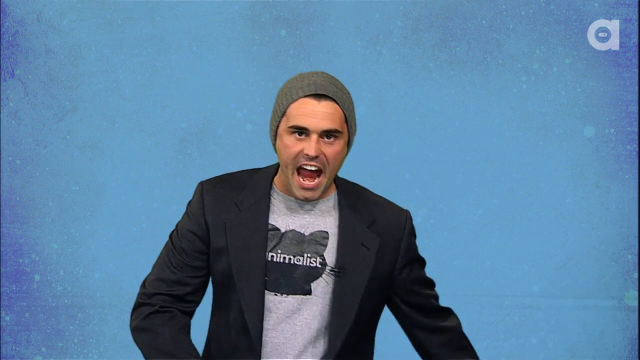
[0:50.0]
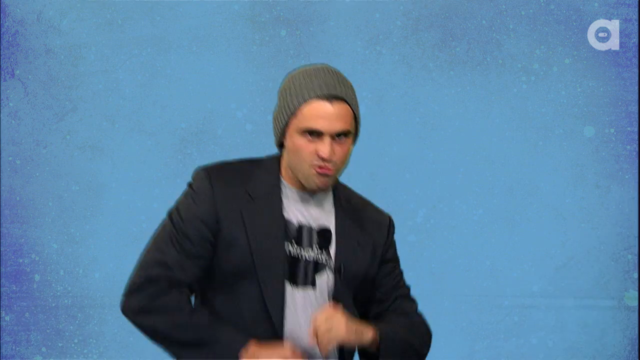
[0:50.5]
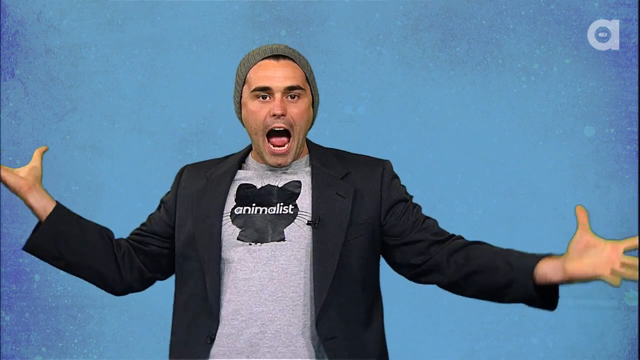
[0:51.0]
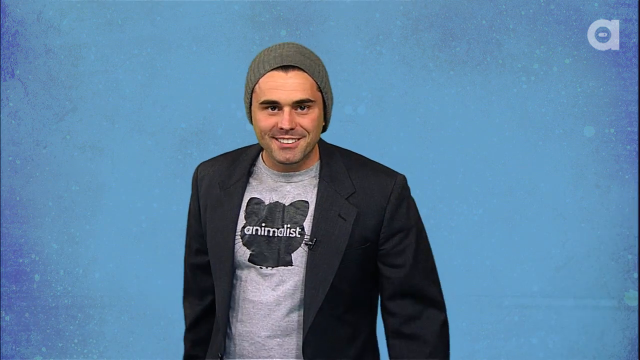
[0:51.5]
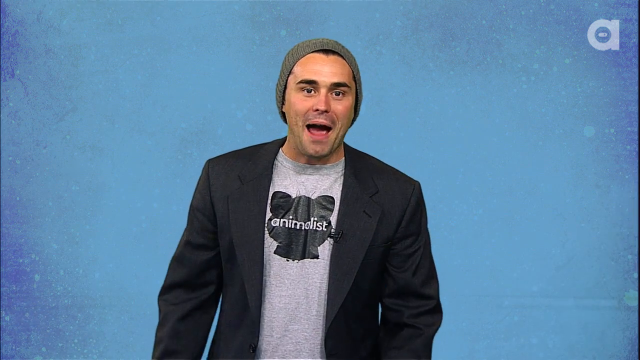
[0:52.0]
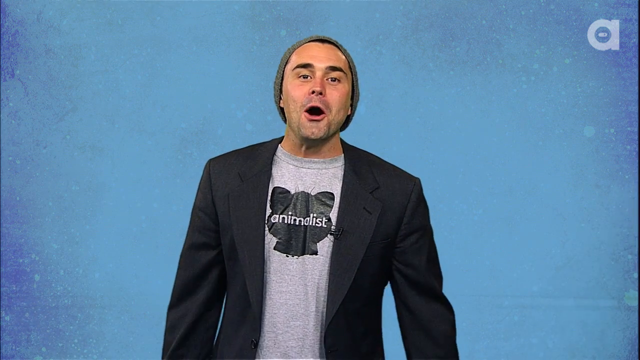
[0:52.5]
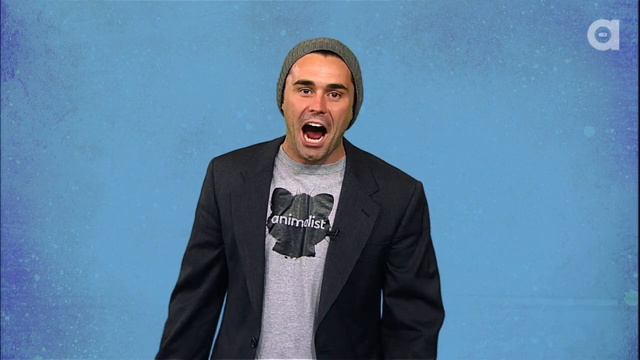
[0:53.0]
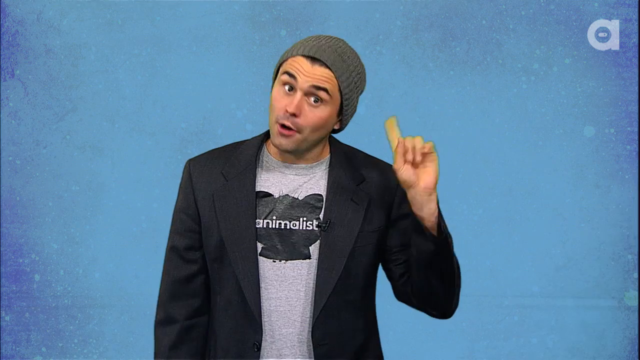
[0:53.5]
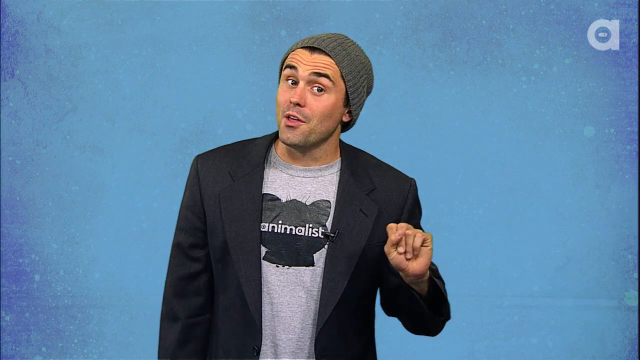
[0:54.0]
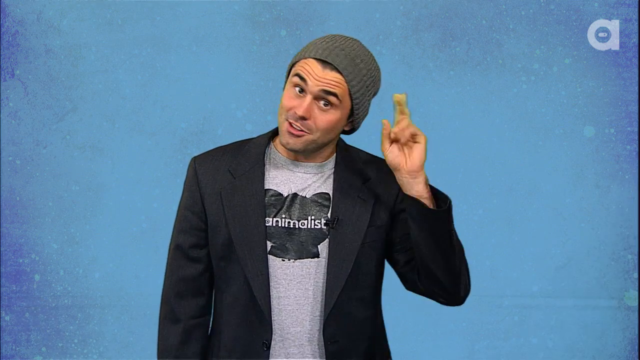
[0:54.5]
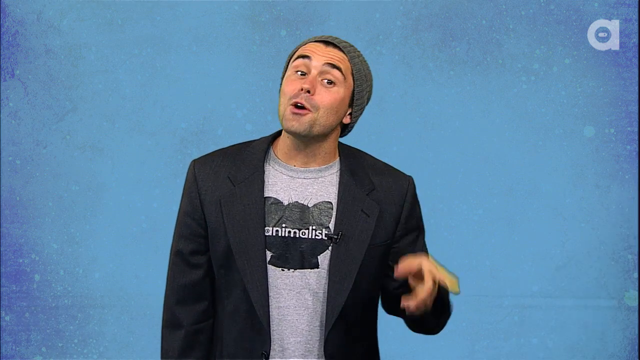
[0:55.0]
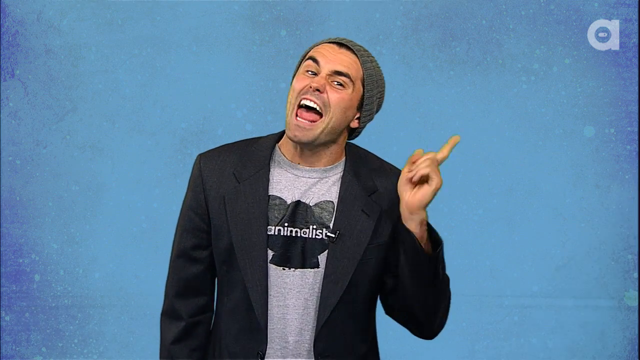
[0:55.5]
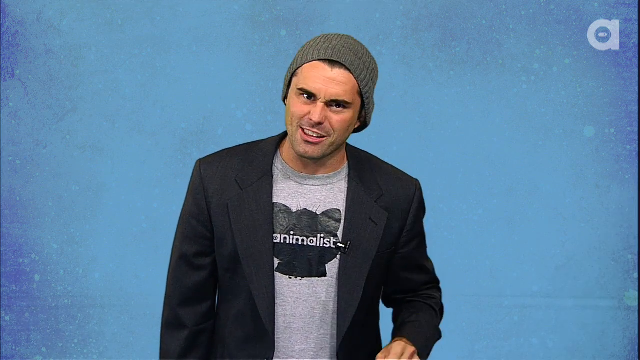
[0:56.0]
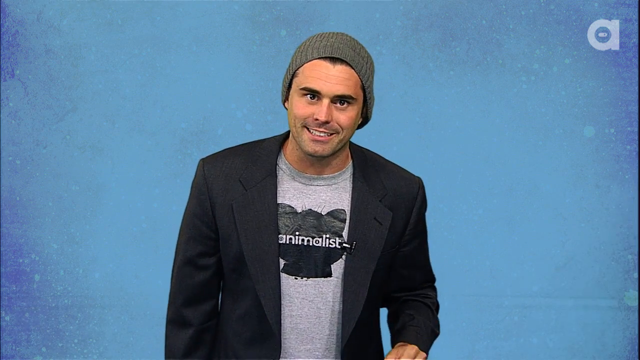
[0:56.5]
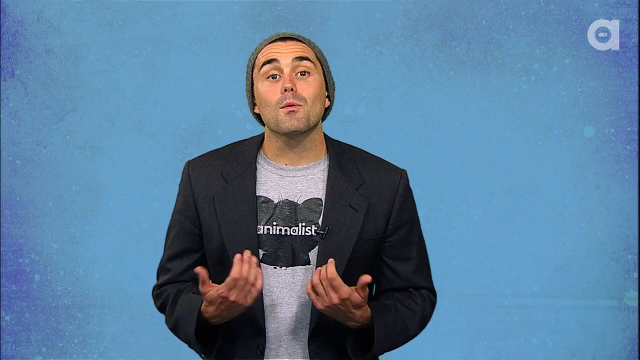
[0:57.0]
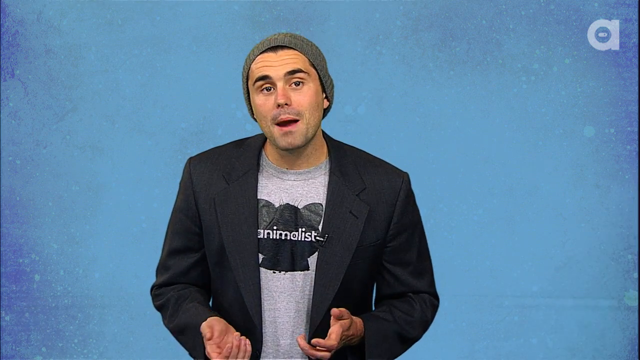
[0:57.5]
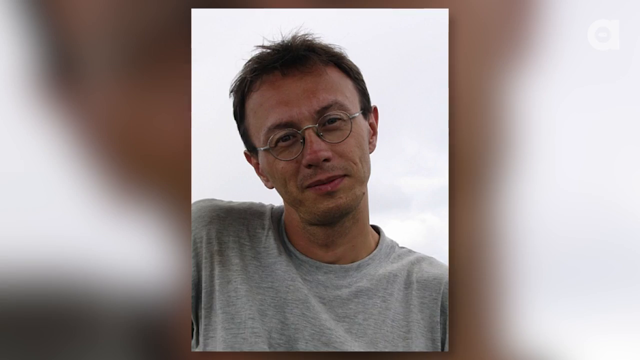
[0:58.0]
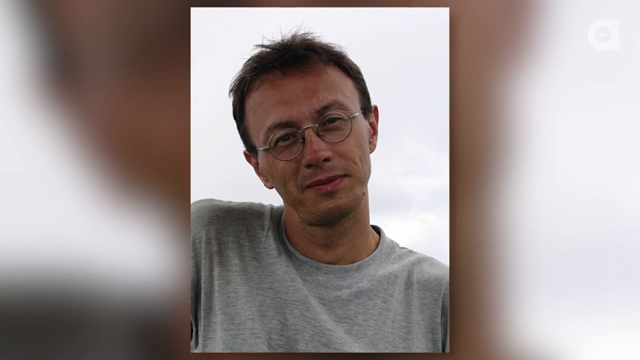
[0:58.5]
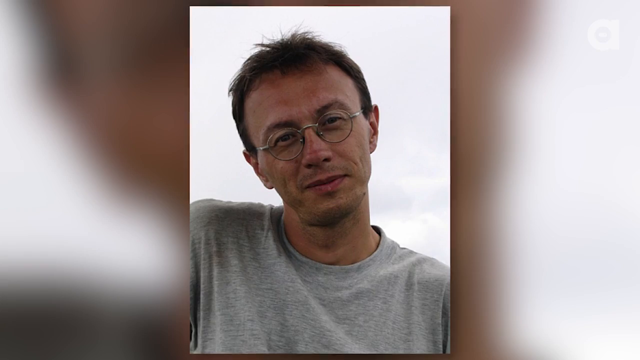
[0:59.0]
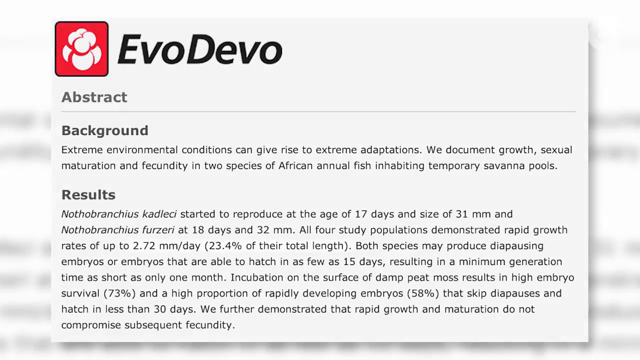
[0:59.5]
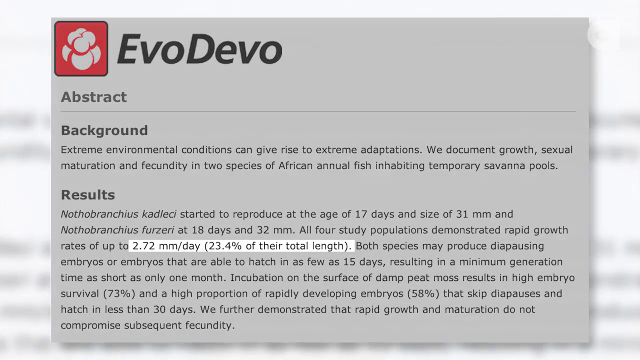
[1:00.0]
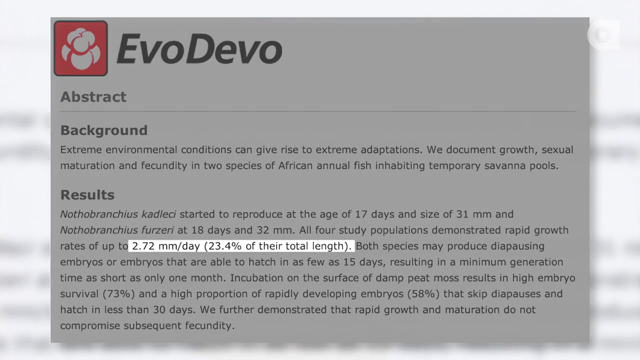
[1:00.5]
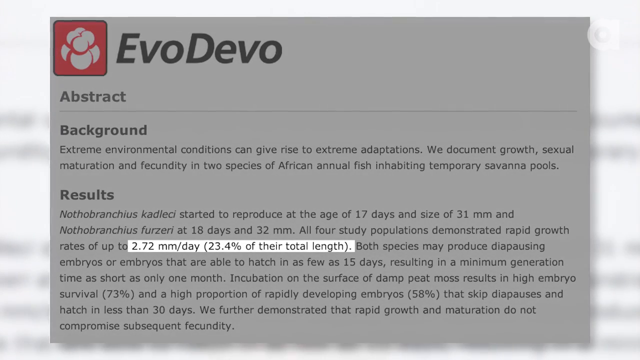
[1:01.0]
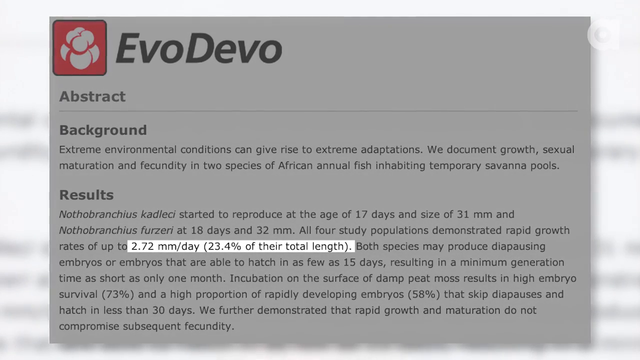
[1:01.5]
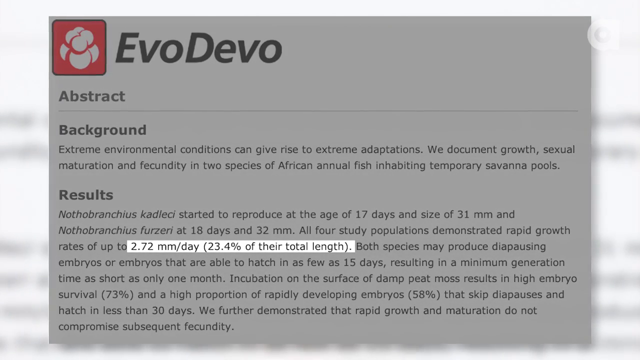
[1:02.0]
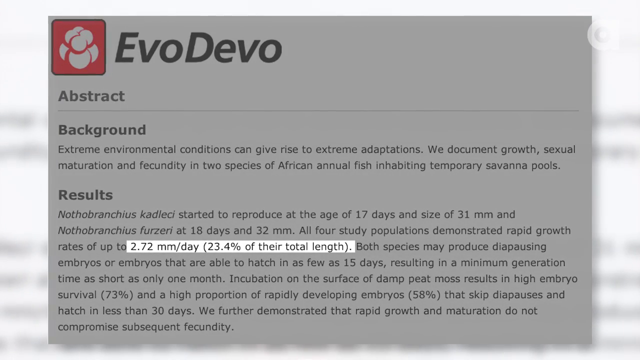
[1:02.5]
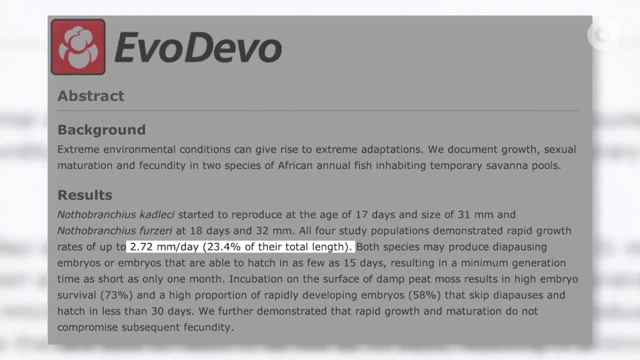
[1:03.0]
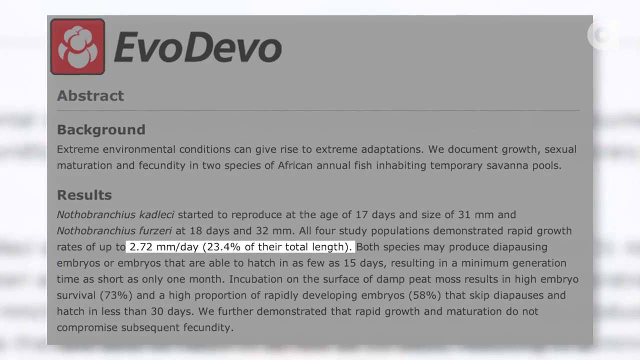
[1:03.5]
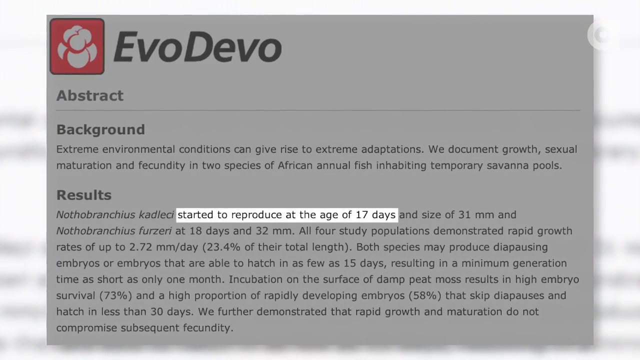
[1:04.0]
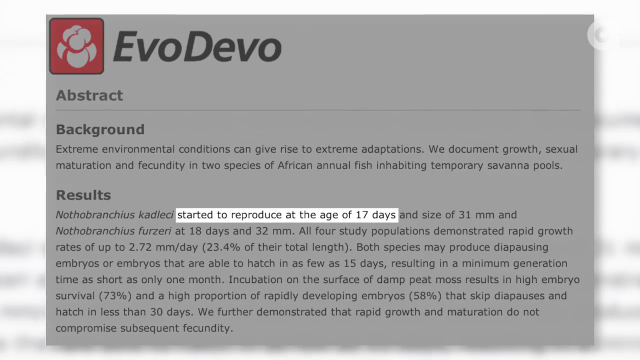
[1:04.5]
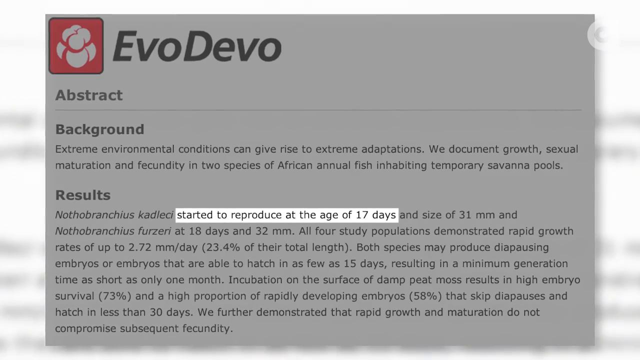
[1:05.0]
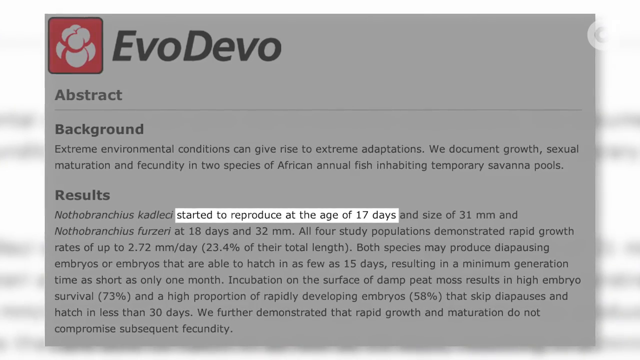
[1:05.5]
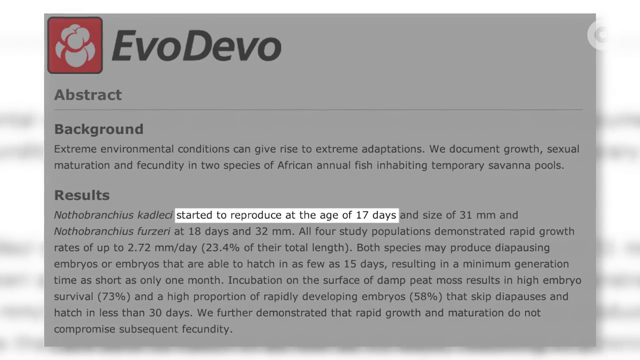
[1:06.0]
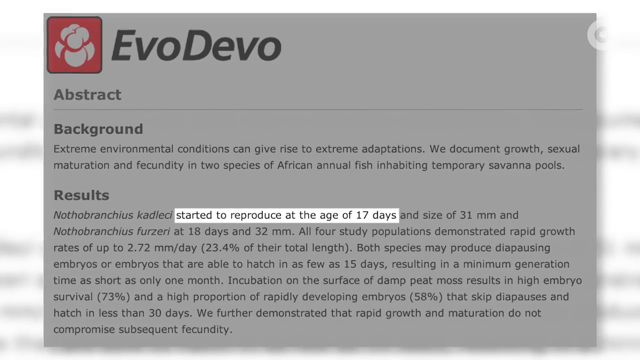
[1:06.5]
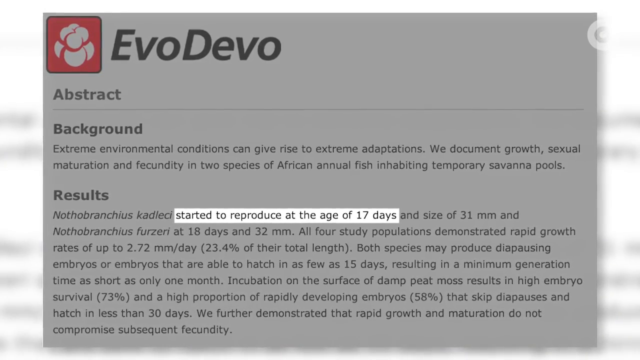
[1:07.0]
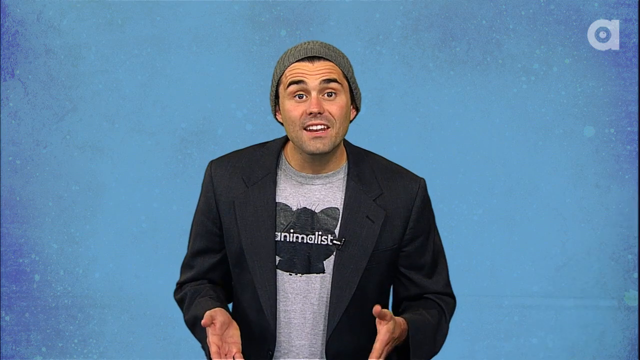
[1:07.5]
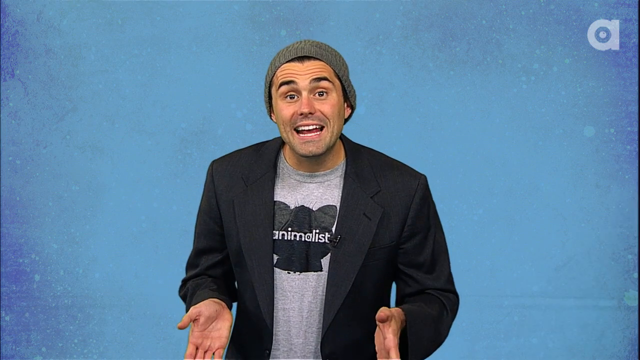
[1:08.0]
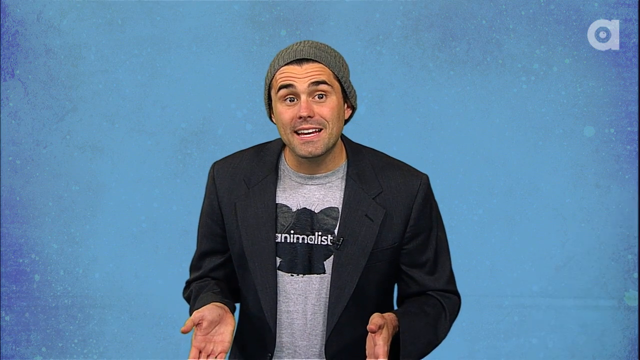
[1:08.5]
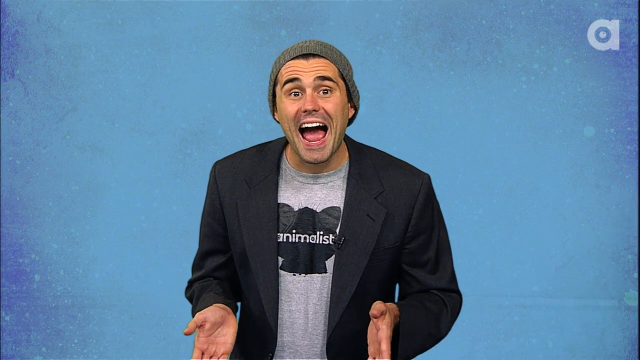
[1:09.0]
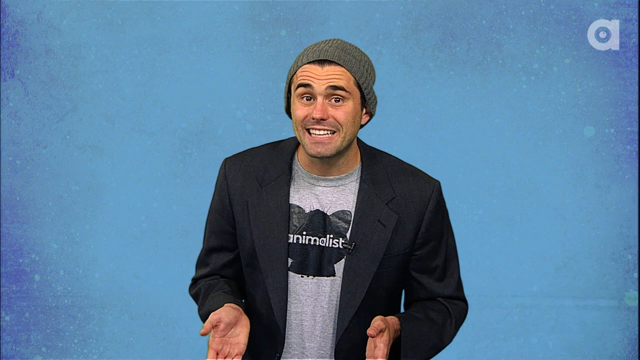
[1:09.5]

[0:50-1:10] The host gestures wildly at the camera. A photo shows an older, very thin man wearing glasses, with very short, blondish hair. Another image appears of a website page with "Evo Devo" and a square logo in the top left. Underneath are "Abstract" and "Background" headings, then a section labeled "Results", under which a highlighted passage reads "started to reproduce at the age of 17 days". It cuts to the host gesturing wildly at the screen, then back to the man, and then to the website section again with another highlighted look at the "started to reproduce at the age of 17 days" passage for emphasis.